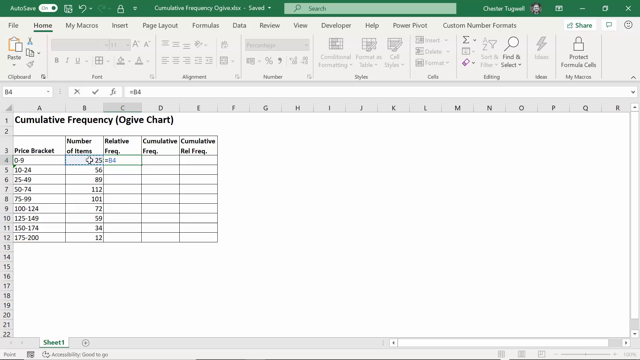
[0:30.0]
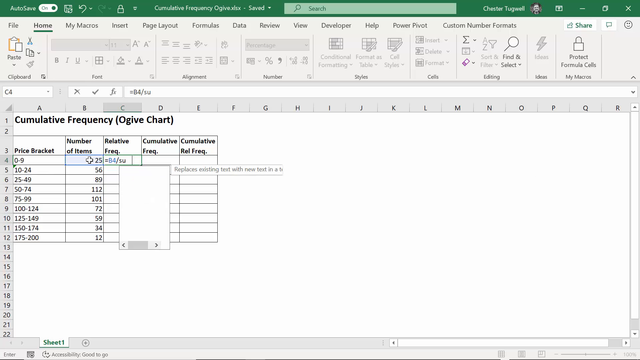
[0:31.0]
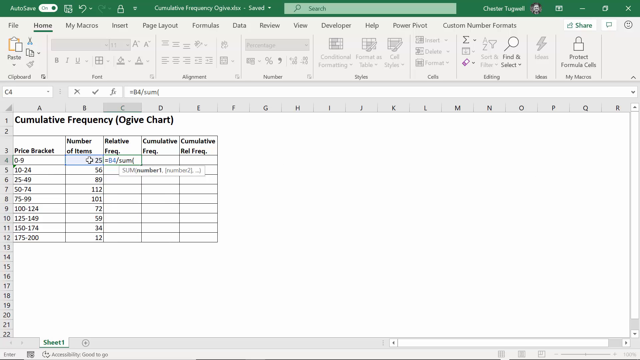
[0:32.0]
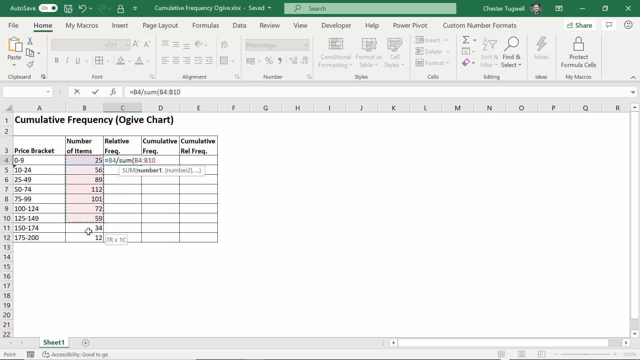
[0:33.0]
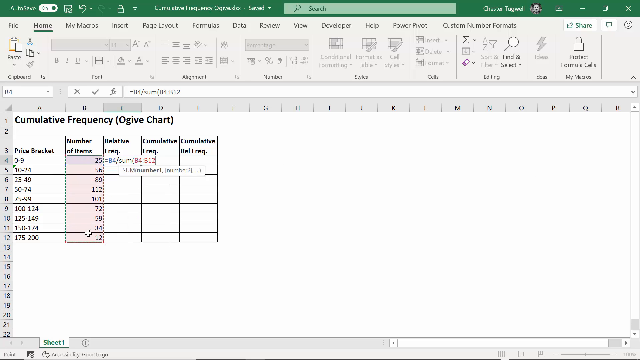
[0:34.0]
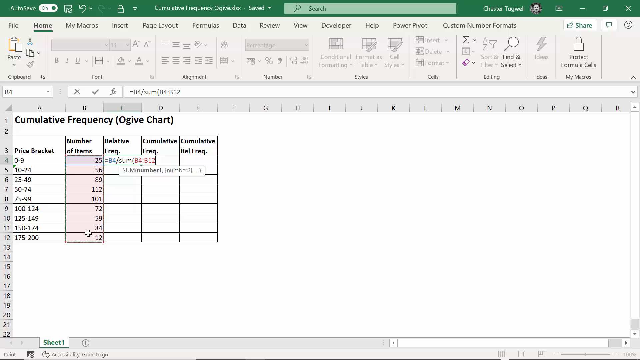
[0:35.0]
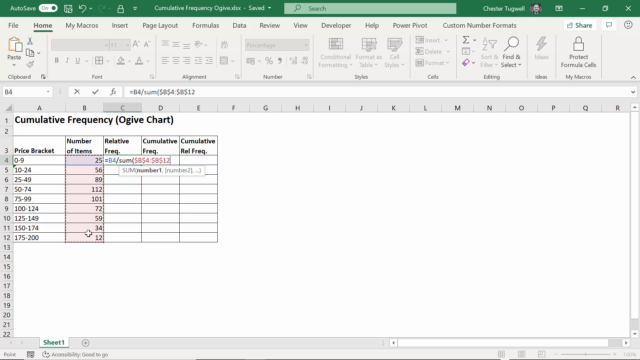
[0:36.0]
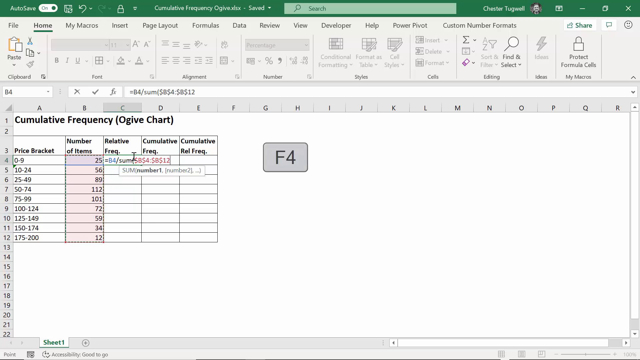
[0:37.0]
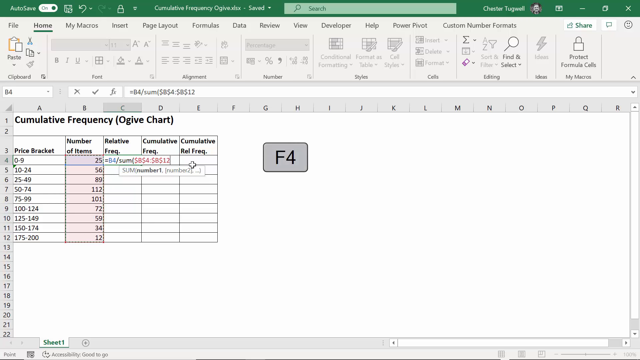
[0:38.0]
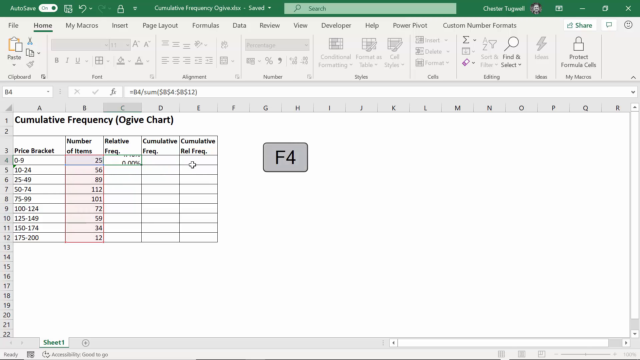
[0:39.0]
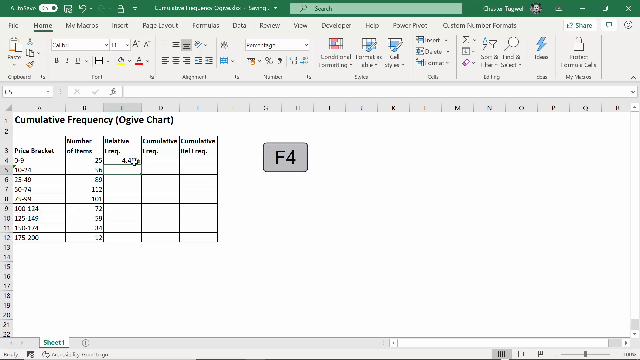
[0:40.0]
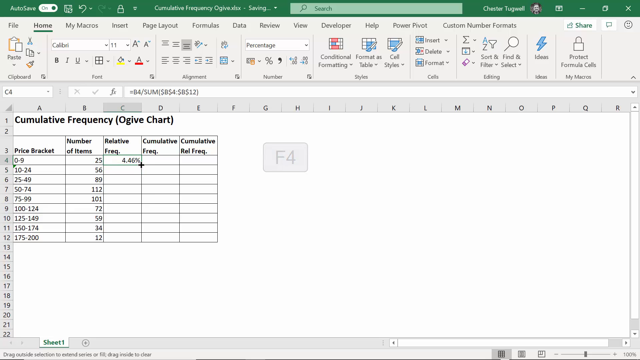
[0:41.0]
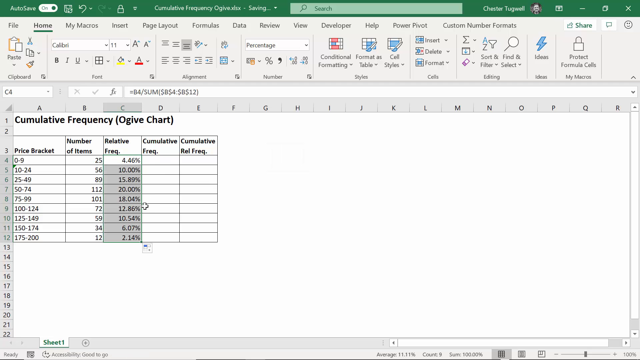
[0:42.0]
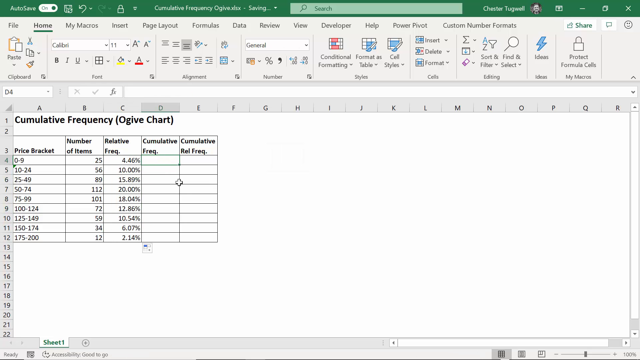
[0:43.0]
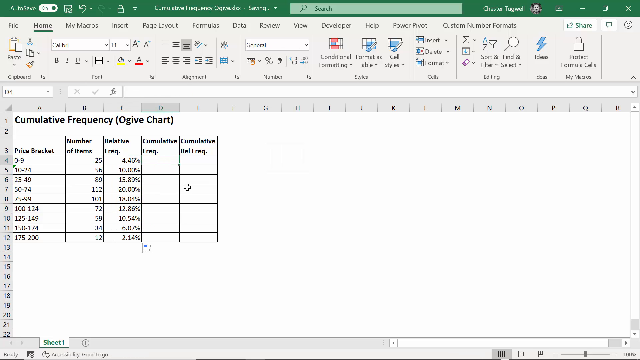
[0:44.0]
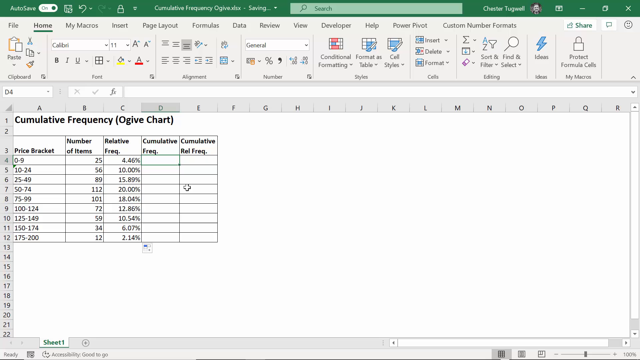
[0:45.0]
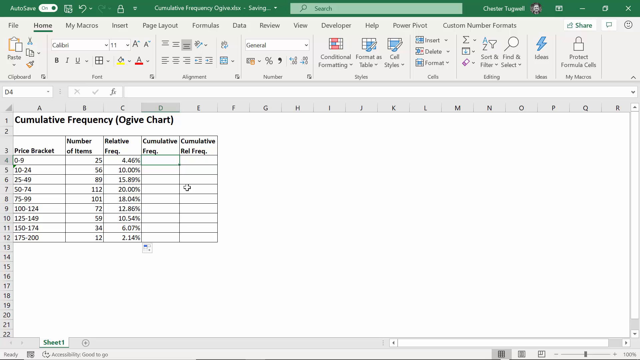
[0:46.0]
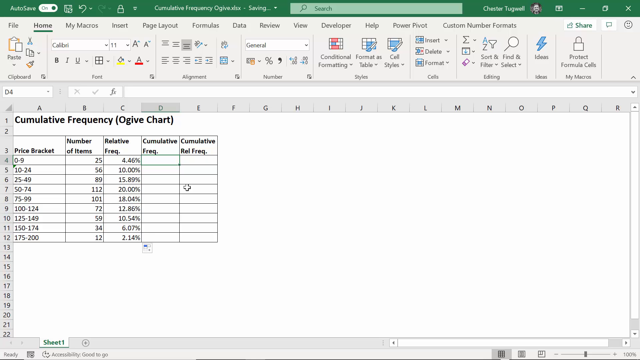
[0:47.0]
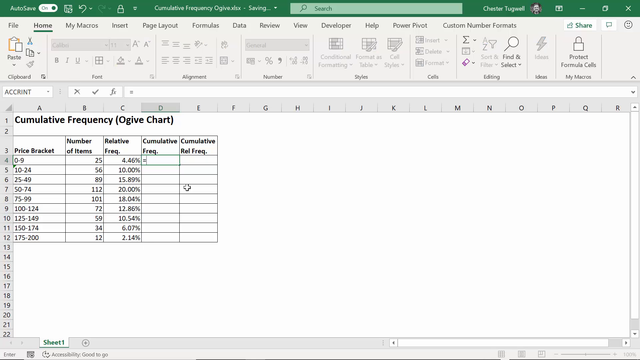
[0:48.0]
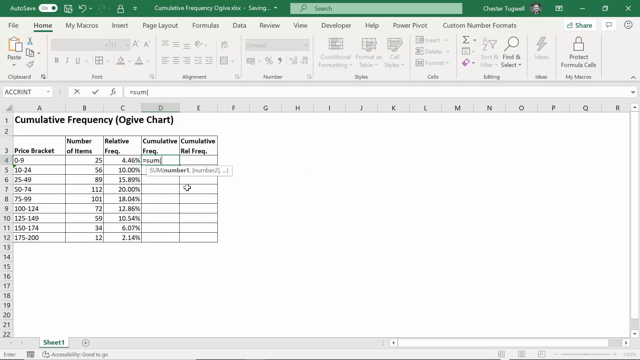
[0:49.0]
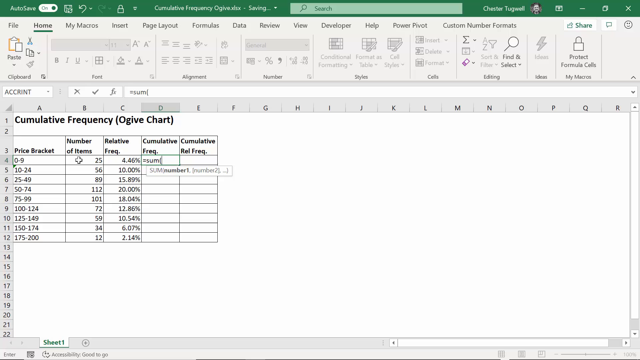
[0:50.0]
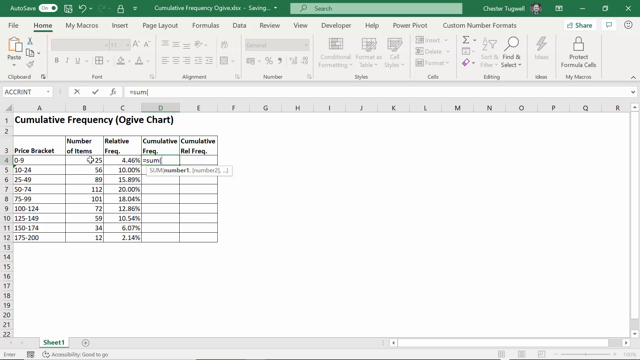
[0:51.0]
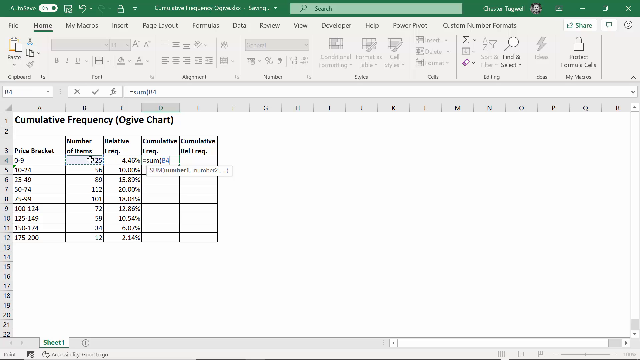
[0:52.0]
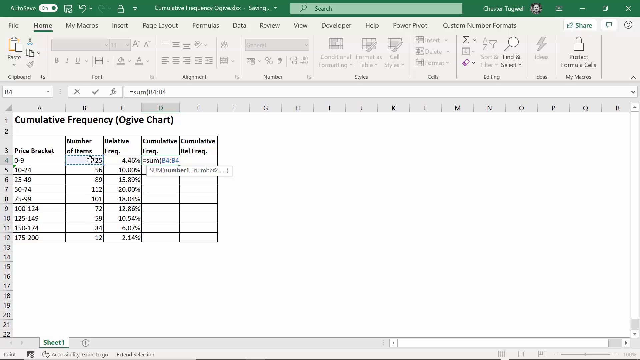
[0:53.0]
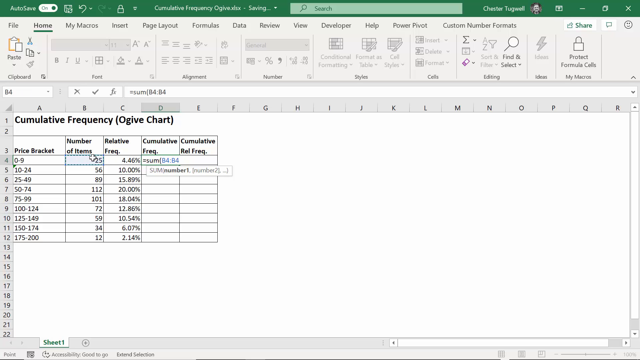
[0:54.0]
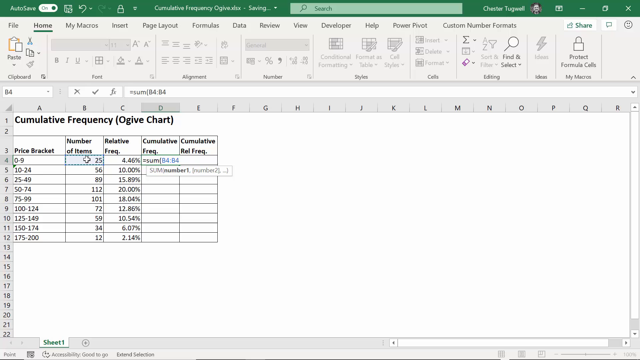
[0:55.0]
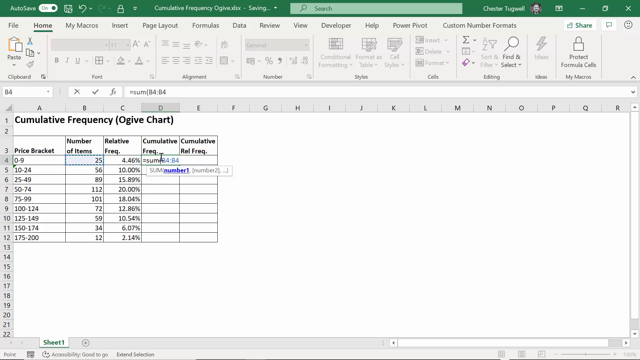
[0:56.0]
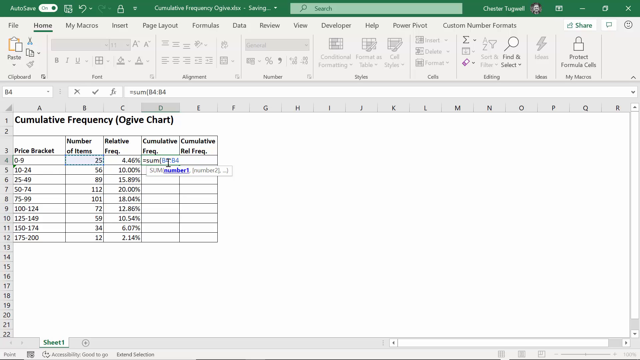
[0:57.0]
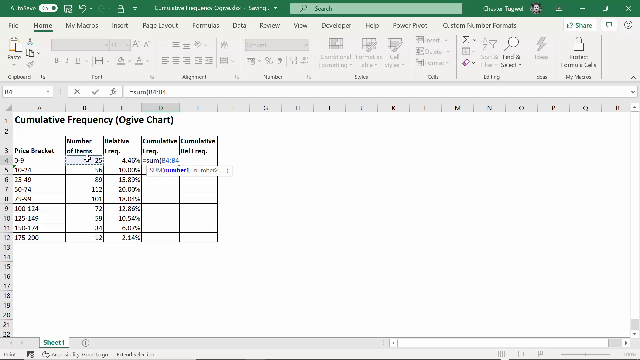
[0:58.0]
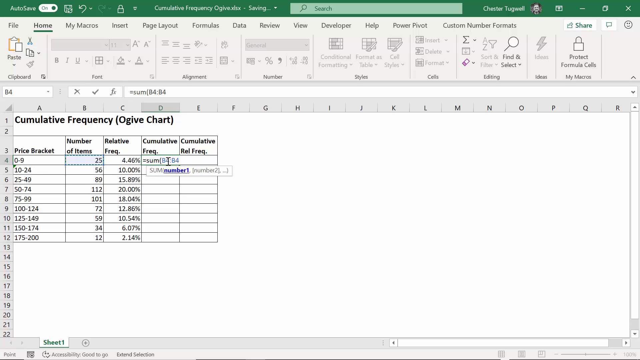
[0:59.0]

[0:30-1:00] The number of items value 25 is selected, and then all of the number of items values are selected, with the cells turning red. The person sums up all of the number of items and enters the percentage 4.46 in the relative frequency column, and the rest of the relative frequency column then fills in automatically with percentages. The cumulative frequency is a sum based on the relative frequency and the number of items.